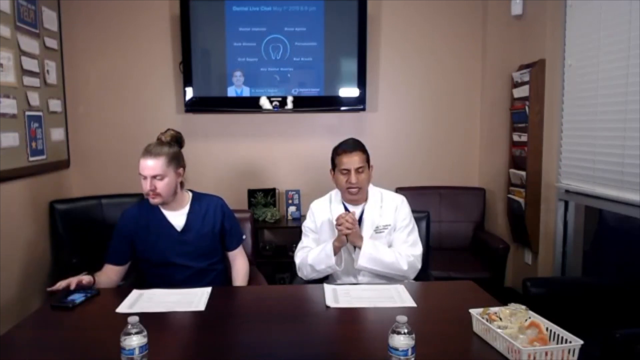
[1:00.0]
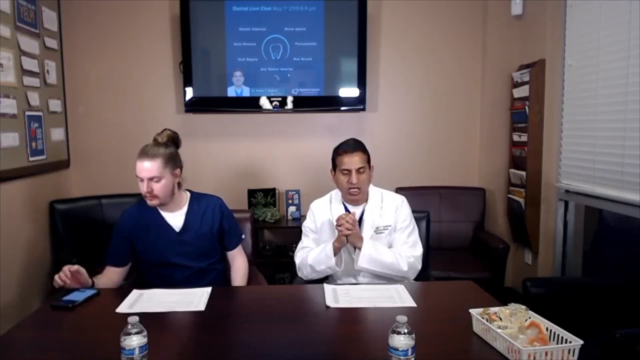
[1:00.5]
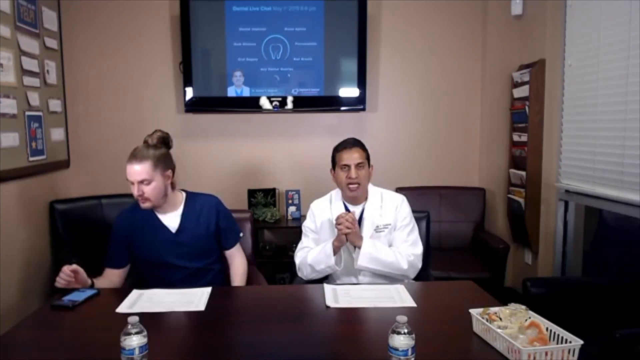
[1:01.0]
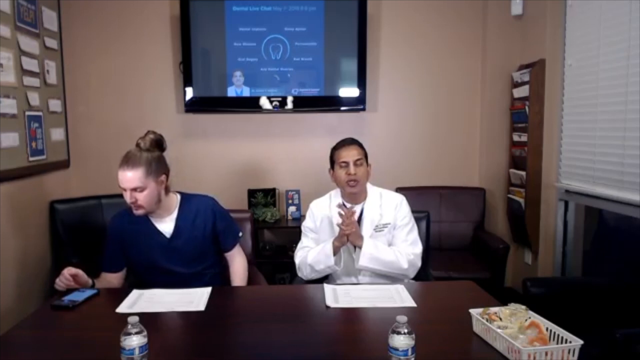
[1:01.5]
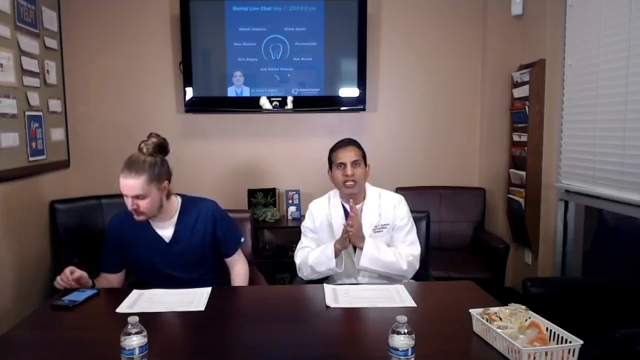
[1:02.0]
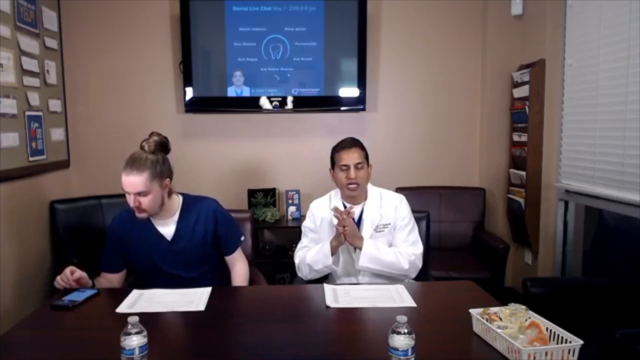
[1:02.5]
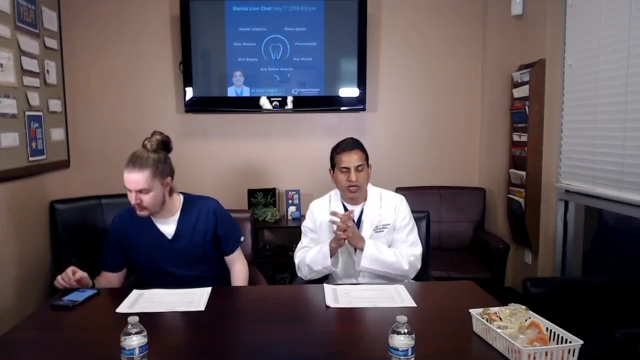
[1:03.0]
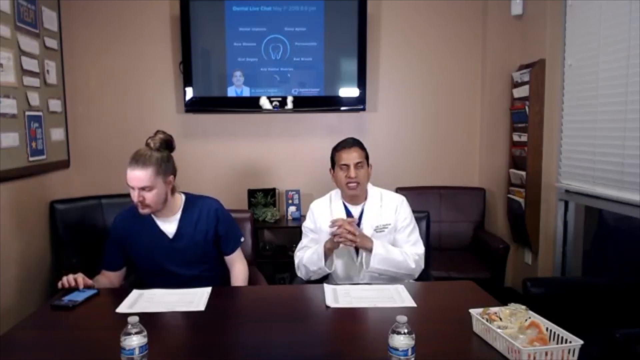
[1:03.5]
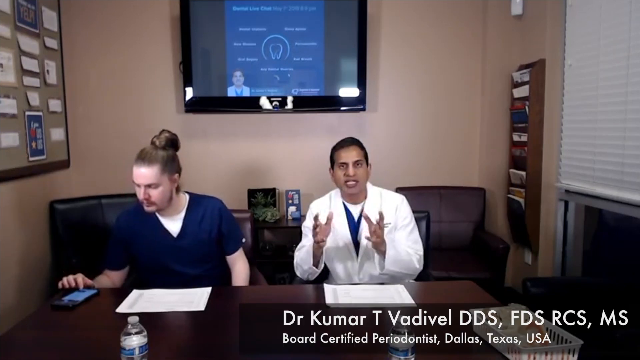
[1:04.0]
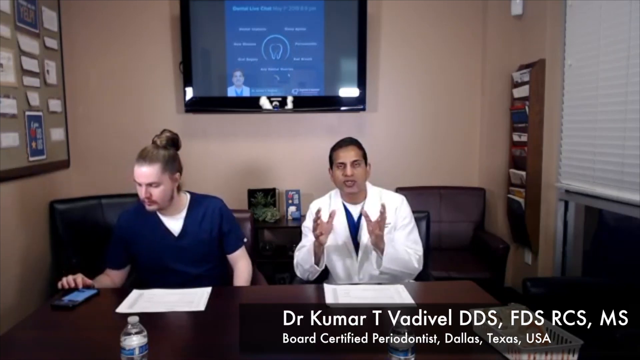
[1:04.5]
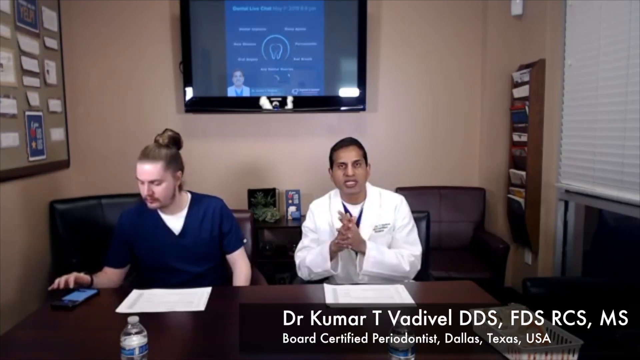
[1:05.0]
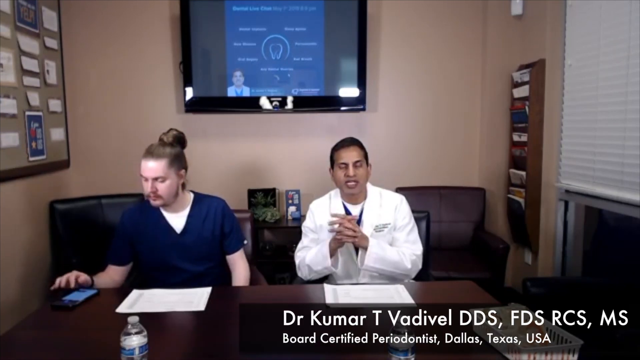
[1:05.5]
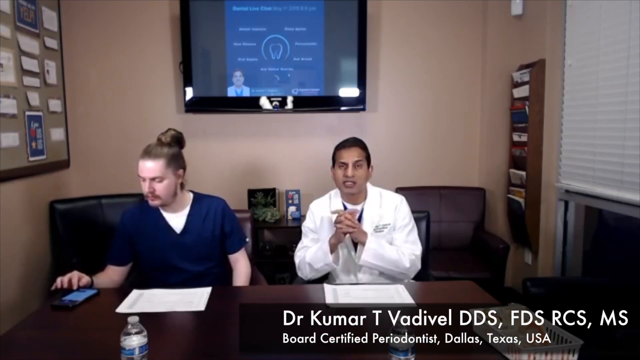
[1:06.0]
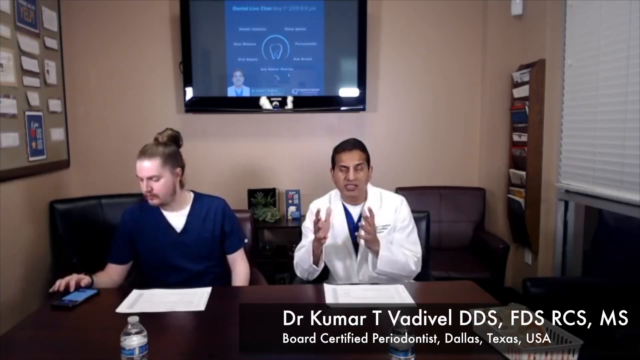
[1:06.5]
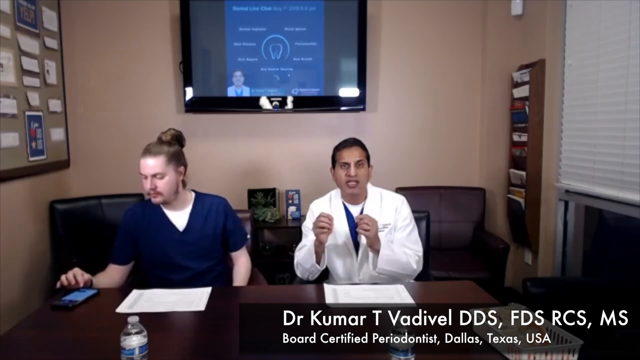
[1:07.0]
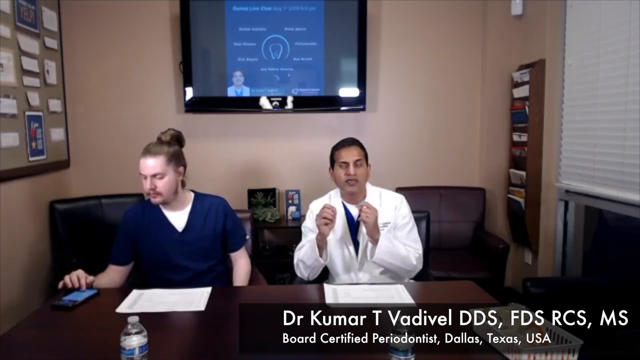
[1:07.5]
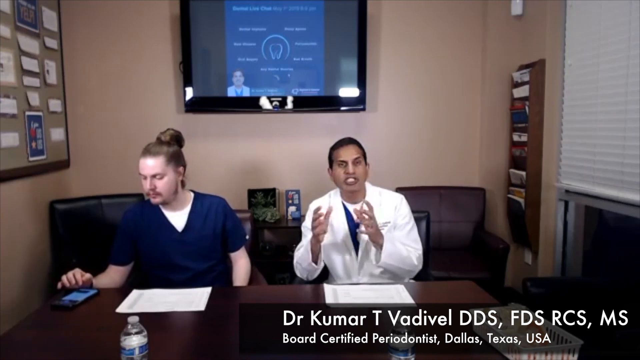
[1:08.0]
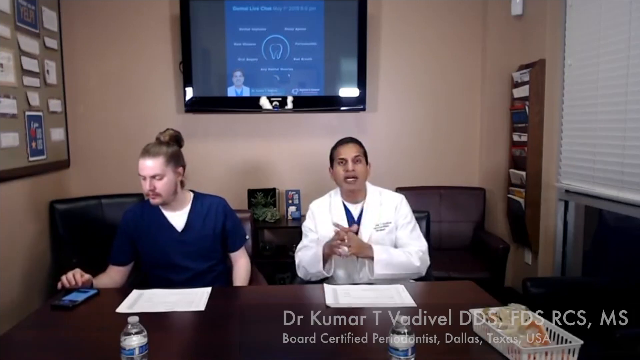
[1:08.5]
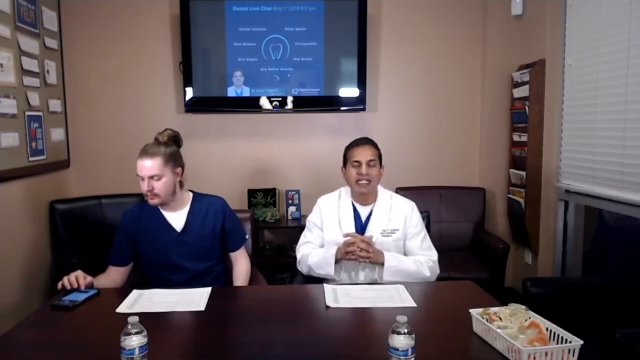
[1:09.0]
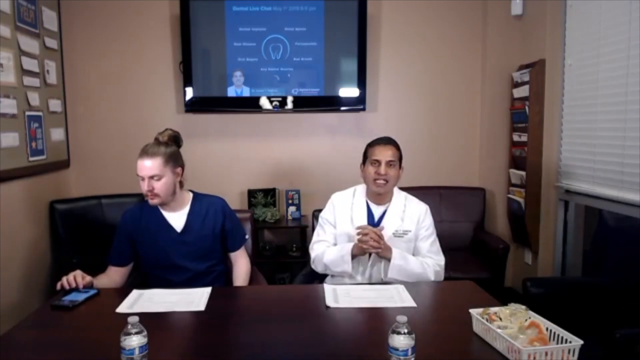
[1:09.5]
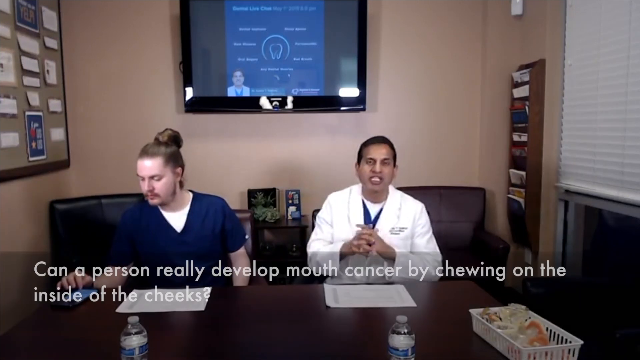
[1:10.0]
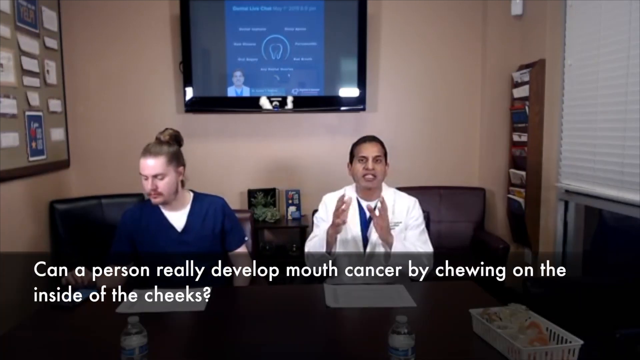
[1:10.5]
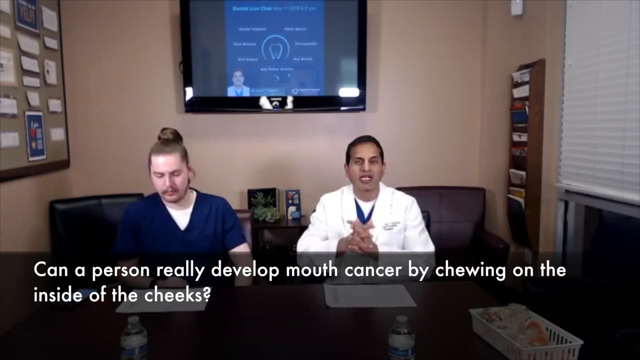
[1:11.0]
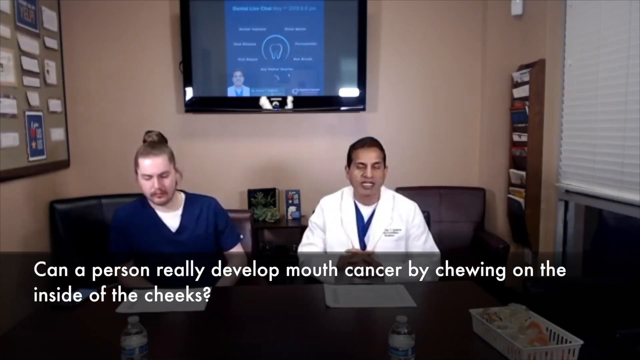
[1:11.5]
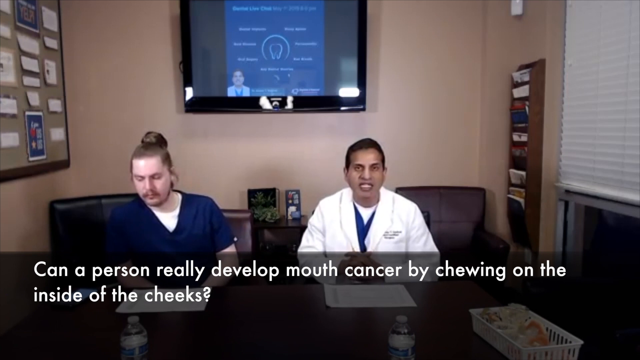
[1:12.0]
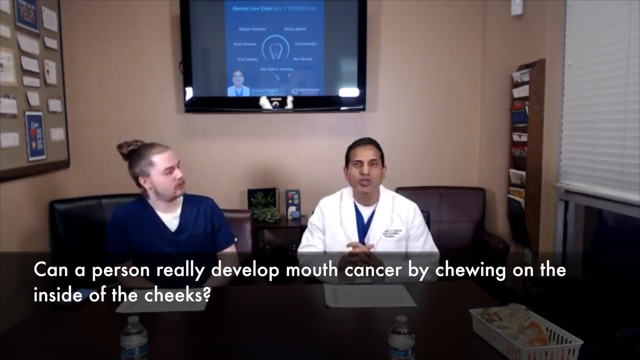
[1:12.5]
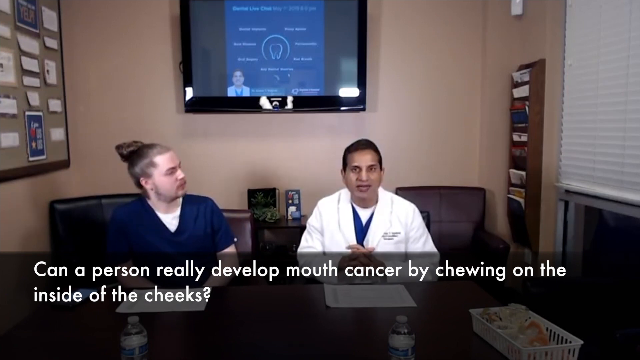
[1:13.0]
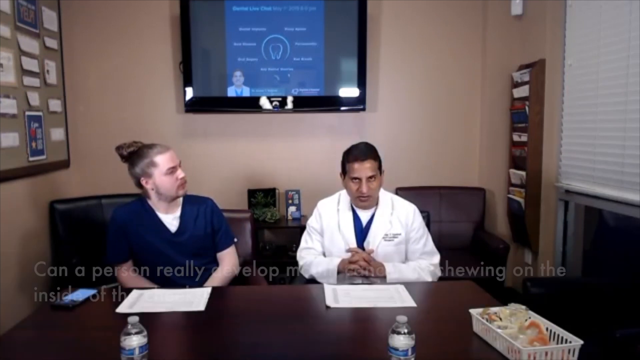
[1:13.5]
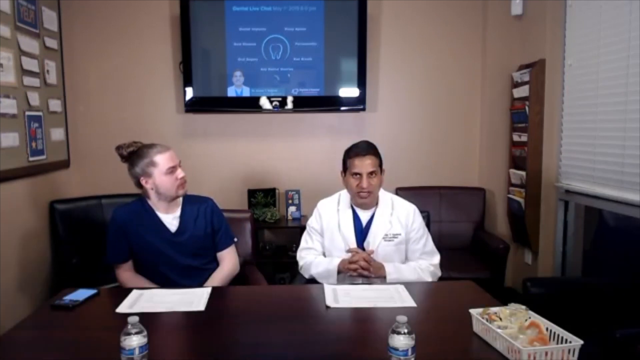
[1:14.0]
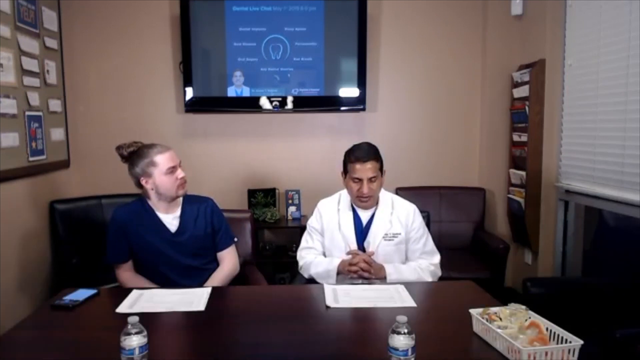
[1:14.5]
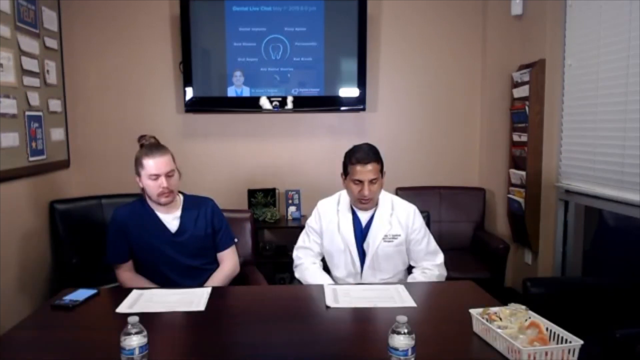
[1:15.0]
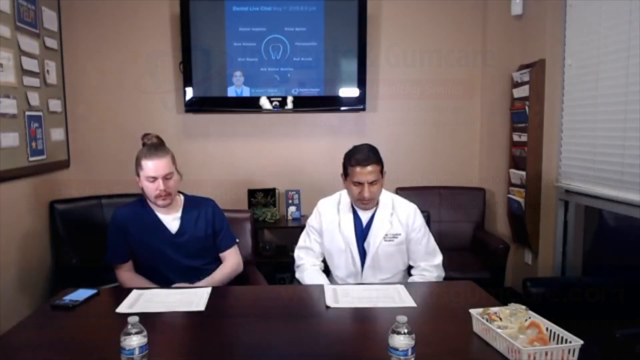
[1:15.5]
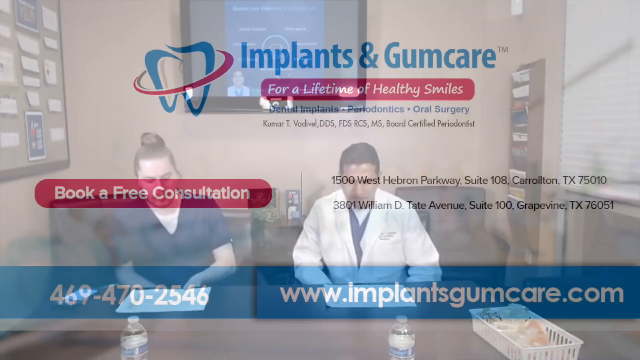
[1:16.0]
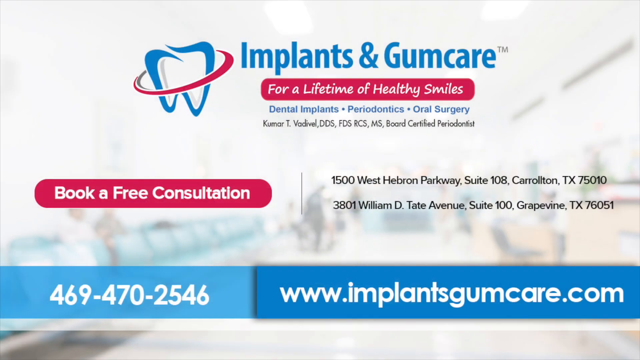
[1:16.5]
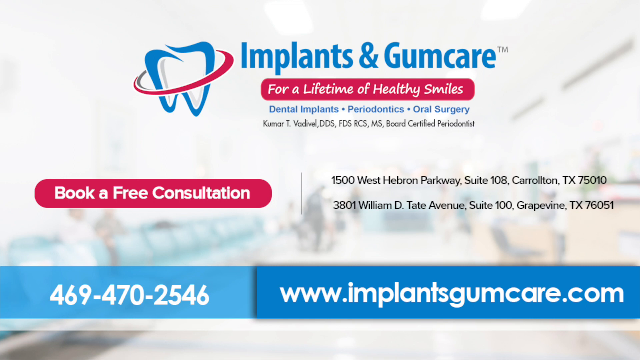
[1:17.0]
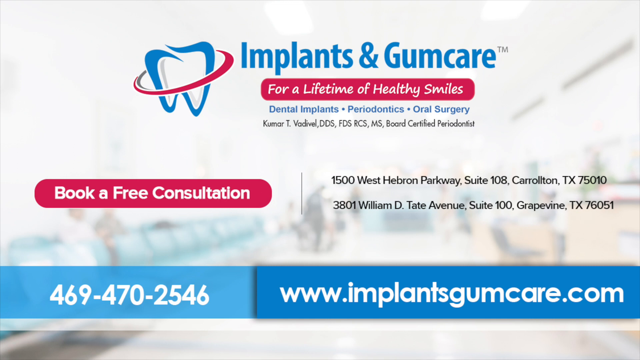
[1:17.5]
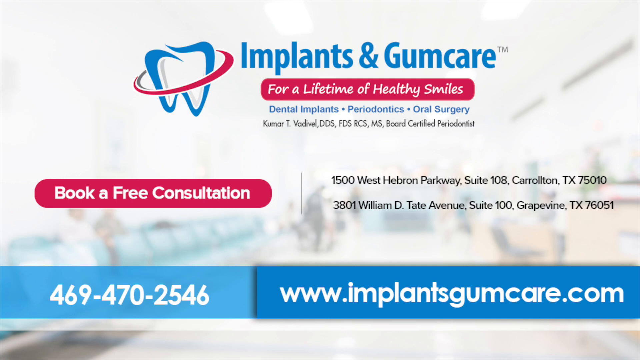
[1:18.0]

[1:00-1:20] Two men sit in an office talking. The man on the right wears a white doctor's smock and the man on the left wears a dark blue scrub top; they look like a doctor and his assistant. The assistant reaches over with his right hand and scrolls through the lit-up screen of a smartphone. Both men have a white piece of paper in front of them that they look down at while the doctor talks, and the doctor moves his hands around, gesturing as he speaks. The video ends with the business's promotional banner, which reads "Implants and Gum Care for a Lifetime of Healthy Smiles, Dental Implants, Periodontics, Oral Surgery." In the lower left it says "Book a Pre-Consultation." The phone number and website address of the business run along the very bottom of the screen, and the addresses of two locations appear in the middle right.